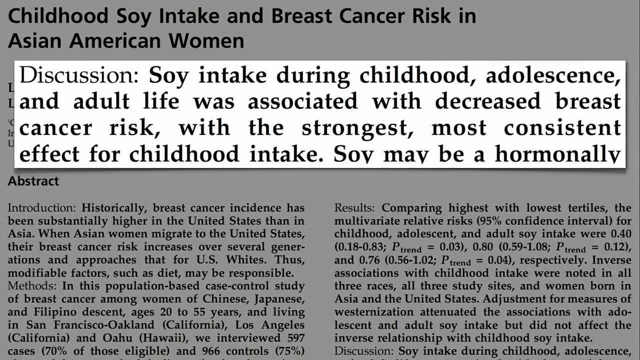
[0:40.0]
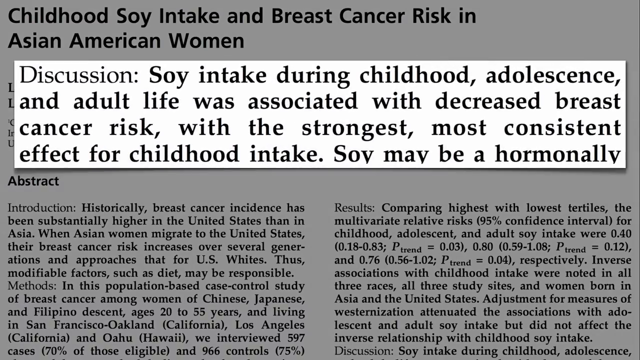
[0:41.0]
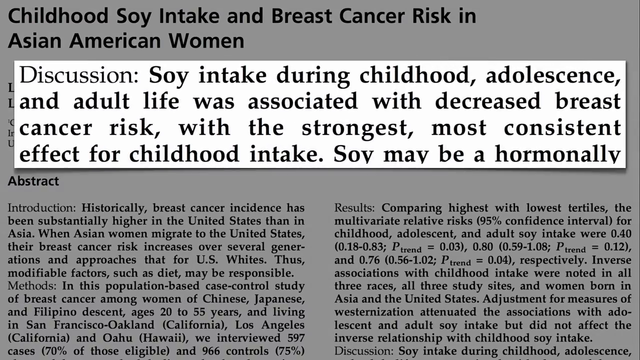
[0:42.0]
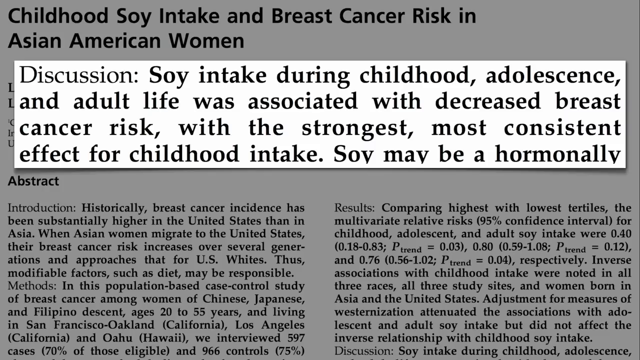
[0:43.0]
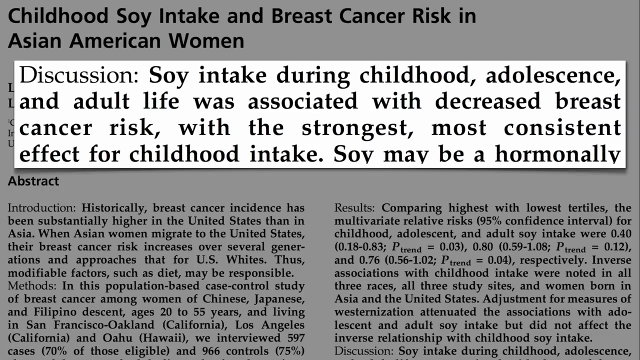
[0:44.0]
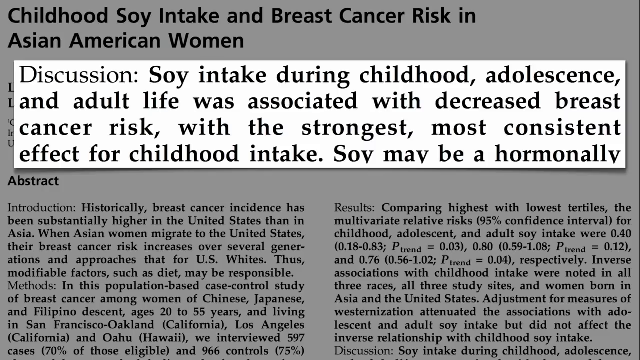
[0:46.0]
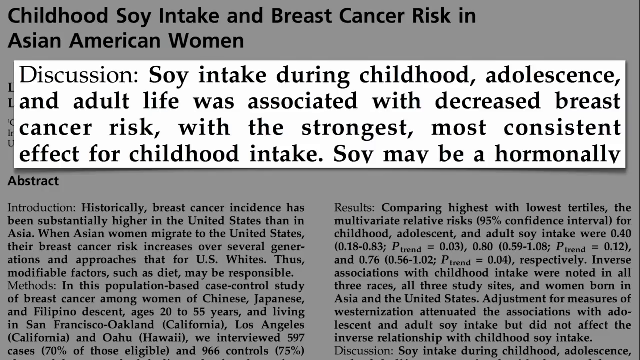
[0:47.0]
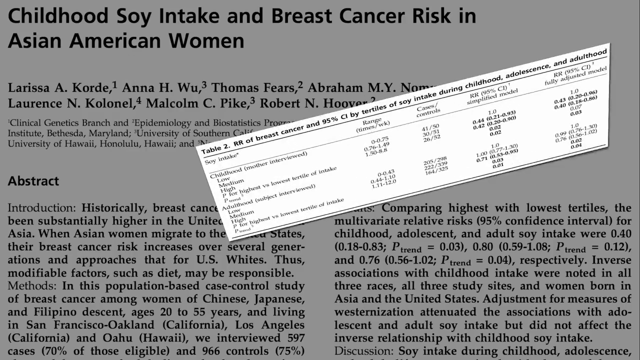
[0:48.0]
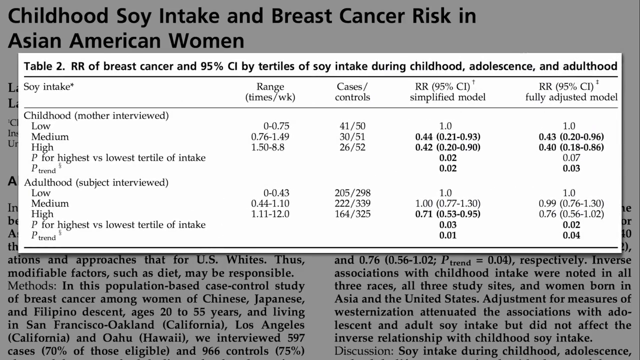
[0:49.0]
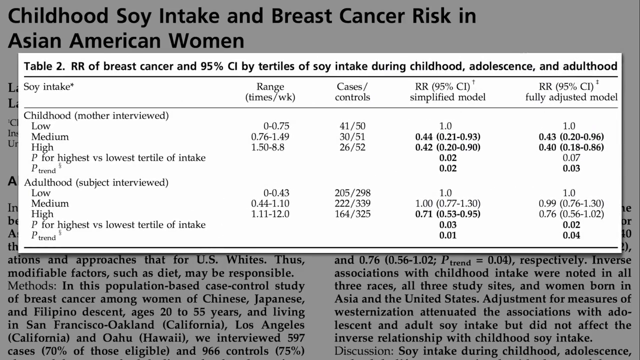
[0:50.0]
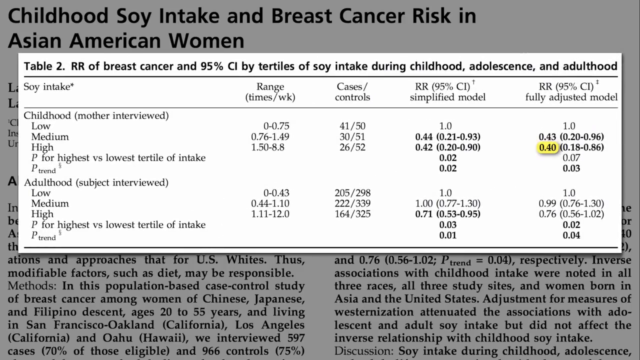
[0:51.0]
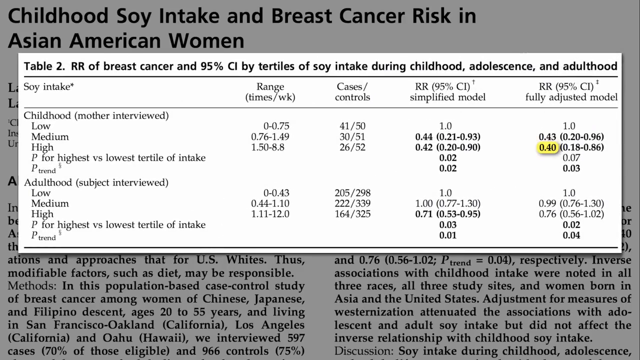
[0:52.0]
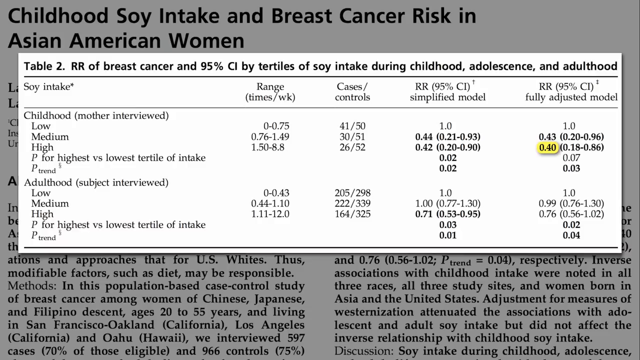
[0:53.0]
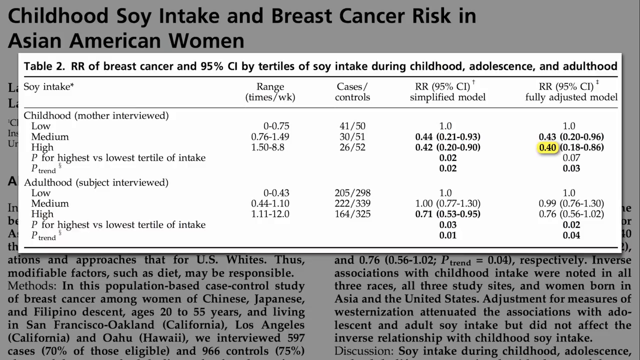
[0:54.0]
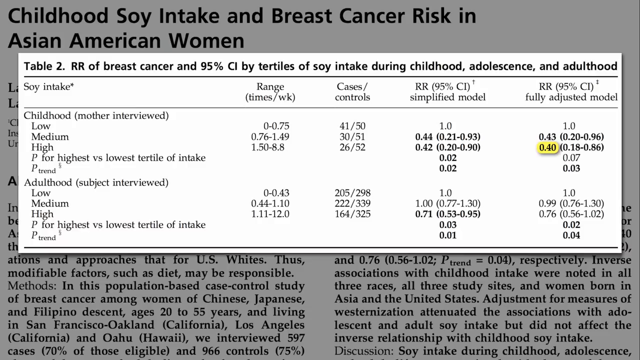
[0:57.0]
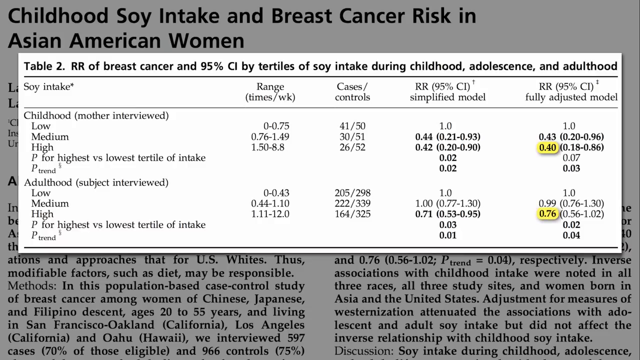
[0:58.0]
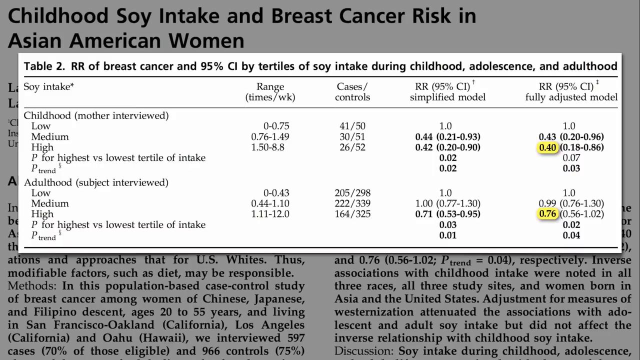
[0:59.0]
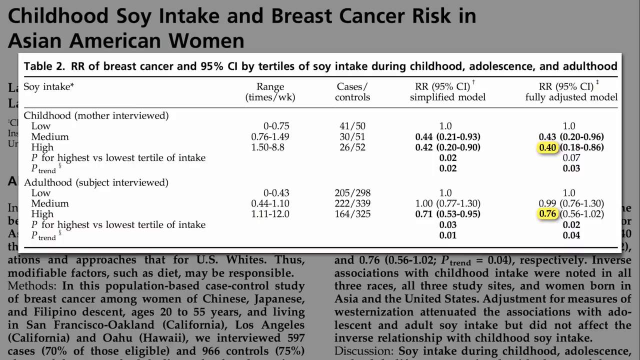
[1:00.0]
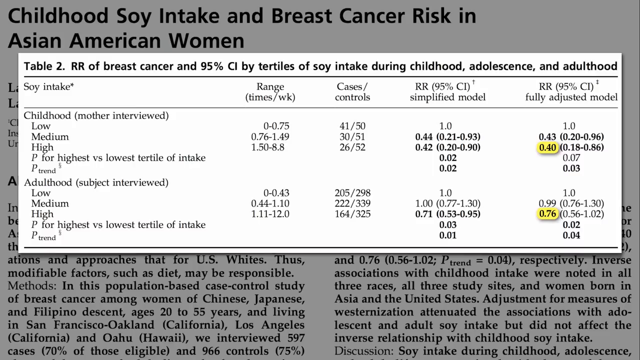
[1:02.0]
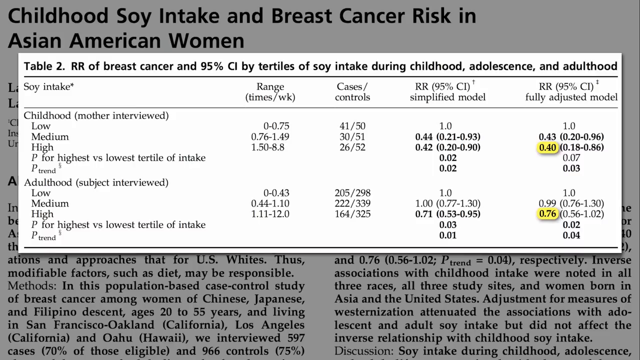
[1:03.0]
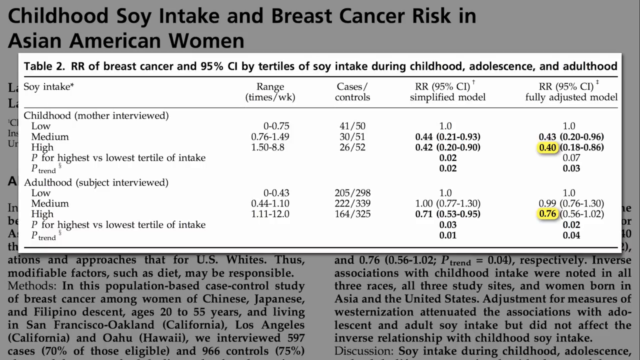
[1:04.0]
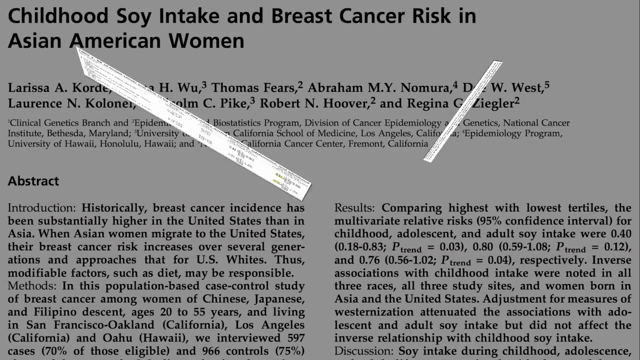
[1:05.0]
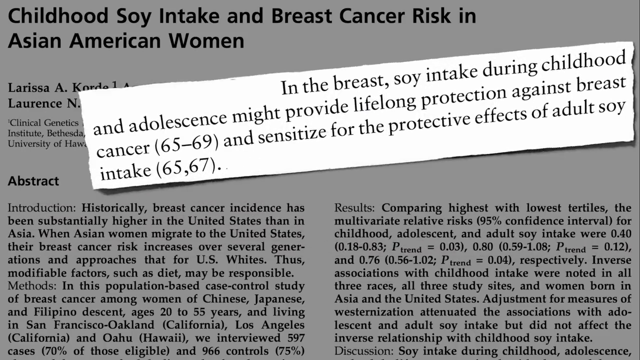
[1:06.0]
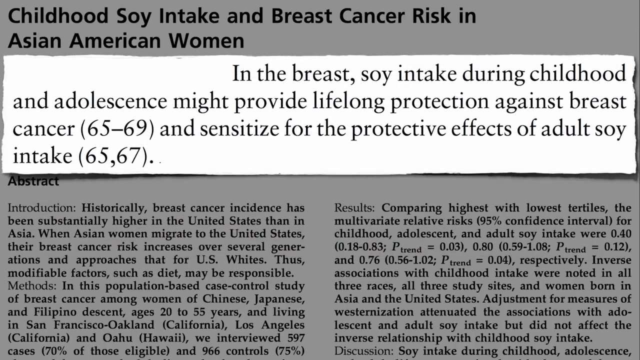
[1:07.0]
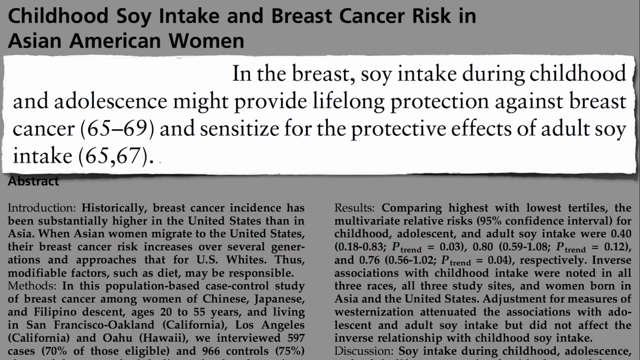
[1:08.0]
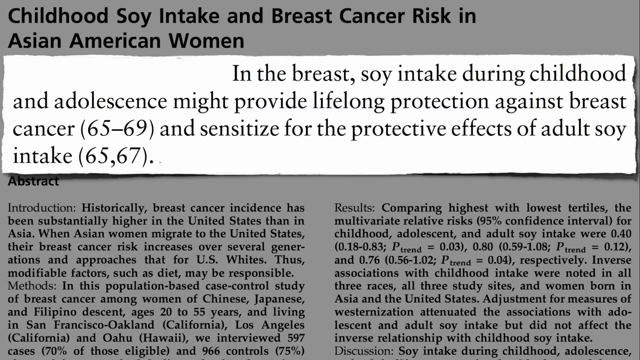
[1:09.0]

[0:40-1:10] The same white background shows the article "Childhood Soy Intake and Breast Cancer Risk in Asian American Women". The authors are still covered by the partial transition of a brighter white rectangle with a black border and black text, and the abstract with the introduction and results can be seen underneath. The shot lingers for several seconds, then the rectangle box moves off to the left, minimizes, moves back to the center and disappears. It is replaced by another box that appears from the upper right section of the screen, enlarges and covers the authors again, with black text reading "table 2, RR of breast cancer, and 95% of CL by tertiles of soy intake during childhood, adolescence, and adulthood". Below is a table with soy intake, the range, cases, the RR simplified model and the RR fully adjusted model, with different values for childhood and adulthood. One value in the RR fully adjusted model column, for childhood high, is highlighted in yellow: 0.40, on the middle right side of the screen. Another value lower down in the same RR fully adjusted model column is highlighted: 0.76, corresponding to the high value for adulthood soy intake. The box then moves off to the left, minimizes and fades away on the upper left side of the screen, and is replaced by another white box appearing from the upper right side of the screen, covering the authors of the underlying article. It is a brighter white with black text that says "in the breast, soy intake during childhood and adolescence might provide a life-long protection against breast cancer 65 to 69 and sensitized for the protective effects of adult soy intake 65, 67".